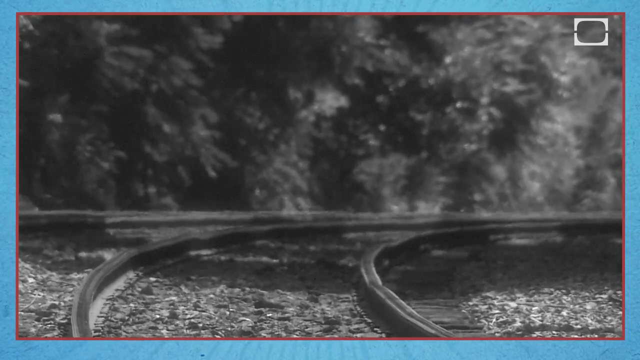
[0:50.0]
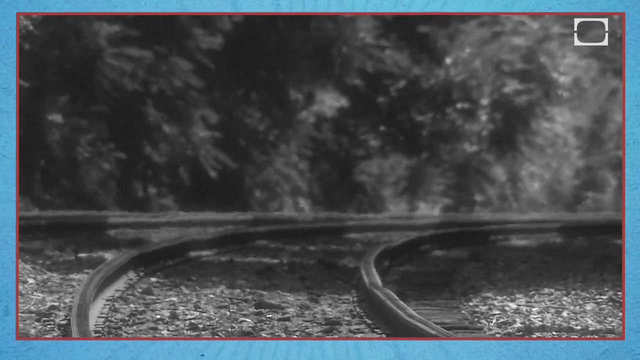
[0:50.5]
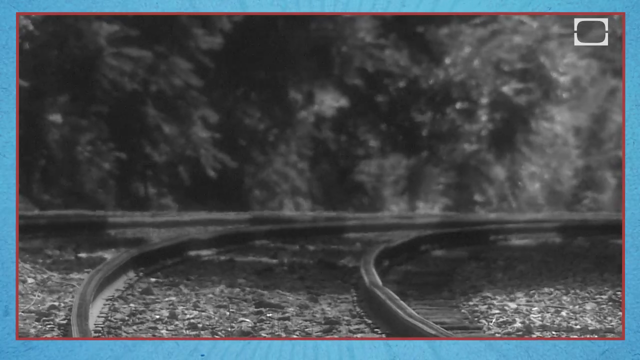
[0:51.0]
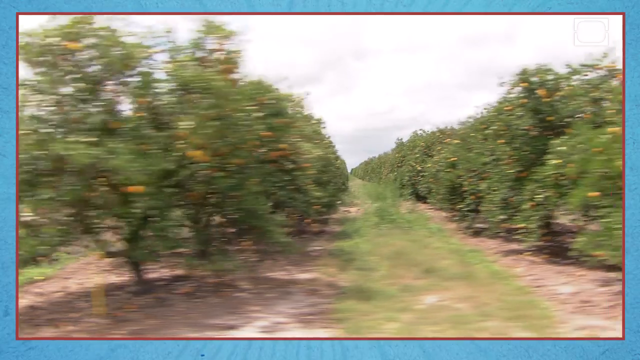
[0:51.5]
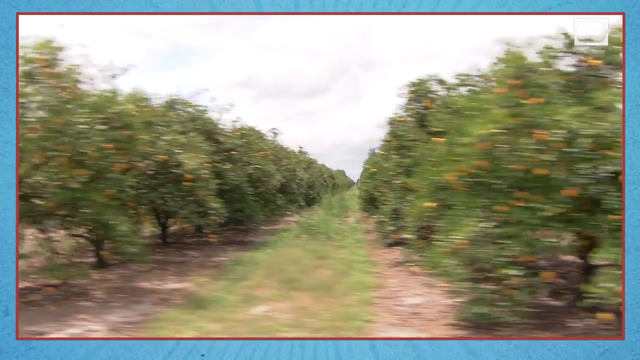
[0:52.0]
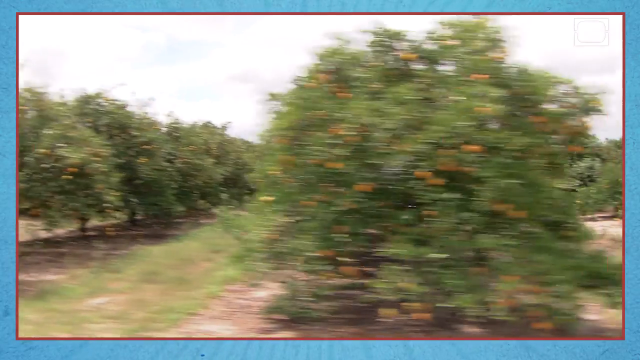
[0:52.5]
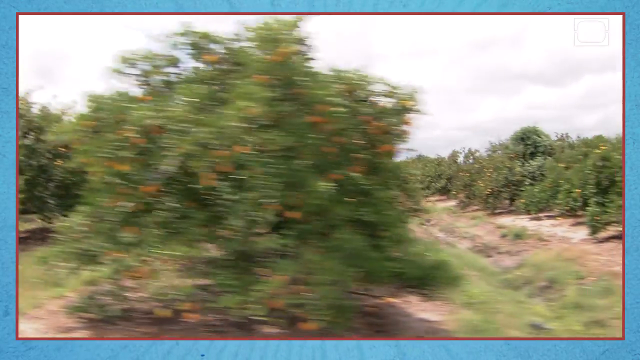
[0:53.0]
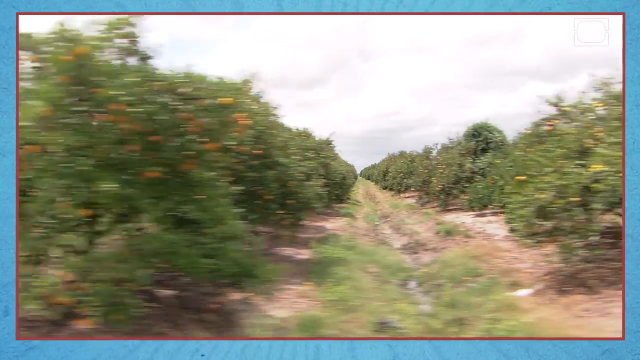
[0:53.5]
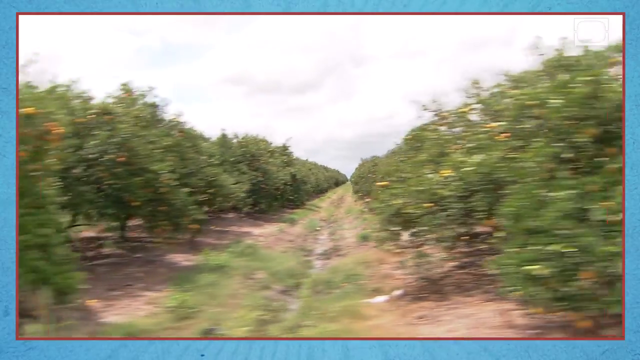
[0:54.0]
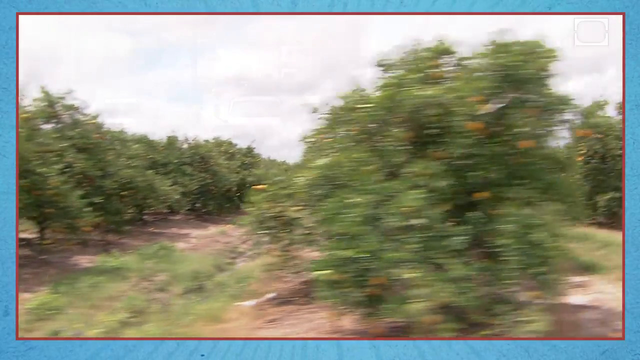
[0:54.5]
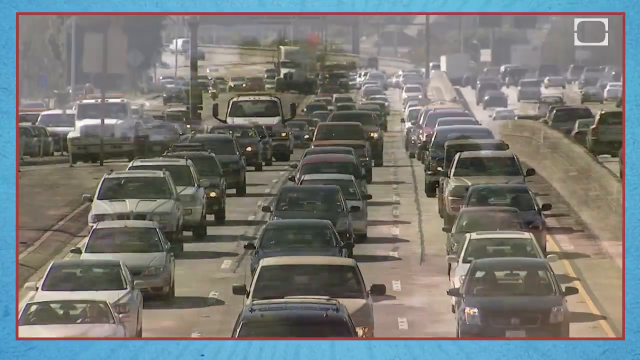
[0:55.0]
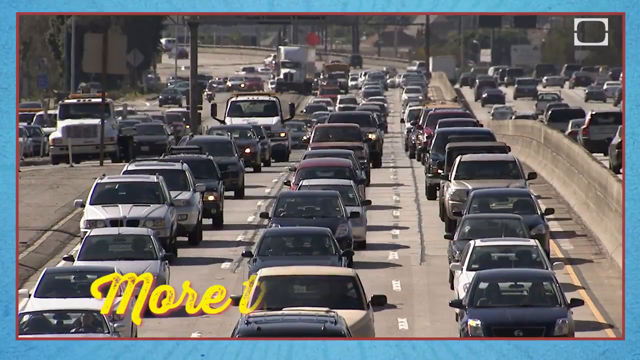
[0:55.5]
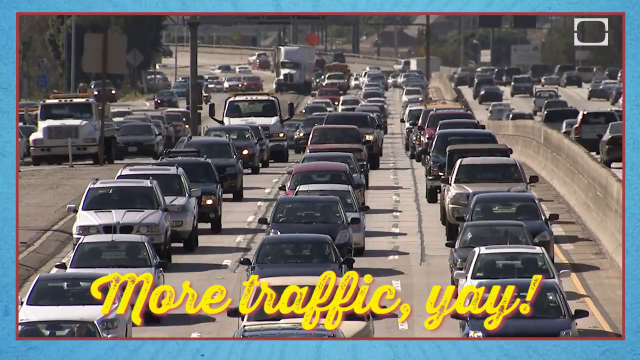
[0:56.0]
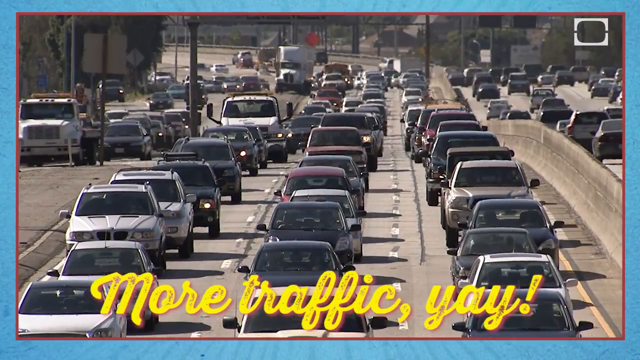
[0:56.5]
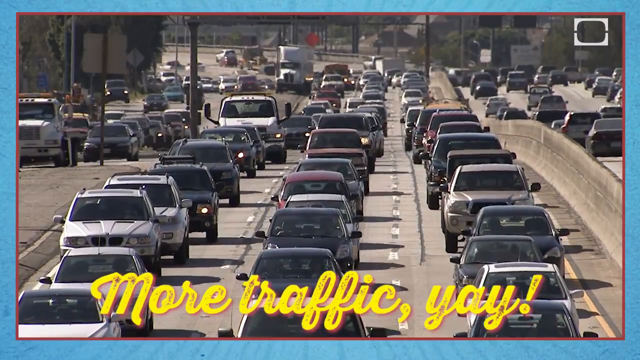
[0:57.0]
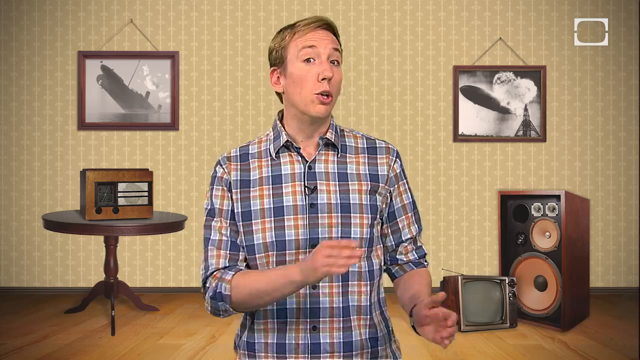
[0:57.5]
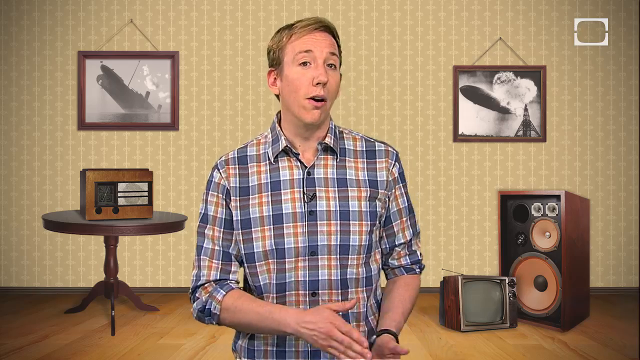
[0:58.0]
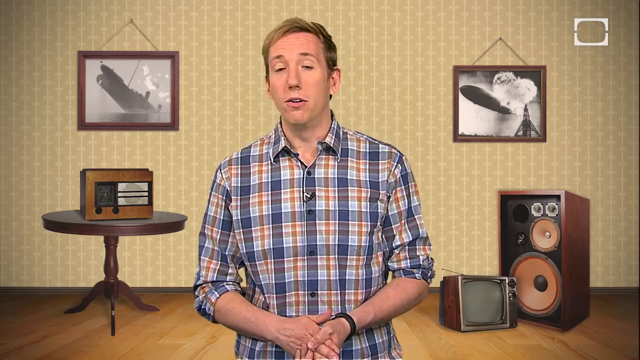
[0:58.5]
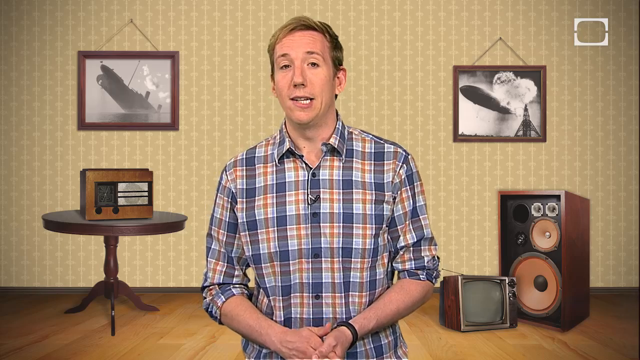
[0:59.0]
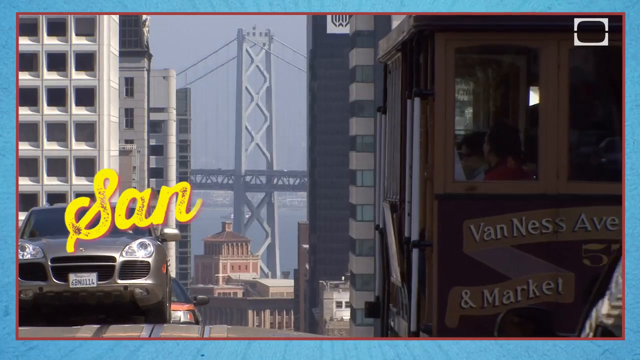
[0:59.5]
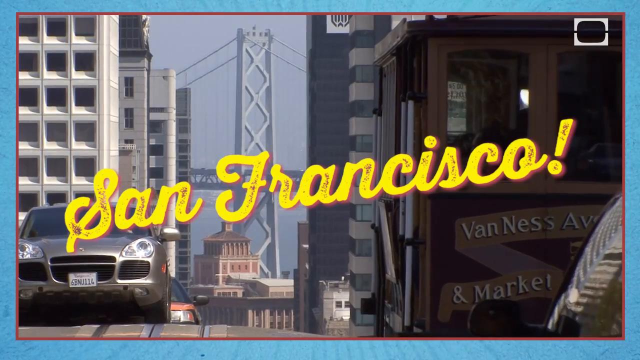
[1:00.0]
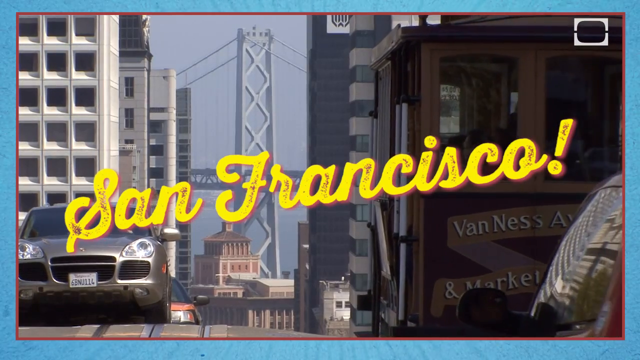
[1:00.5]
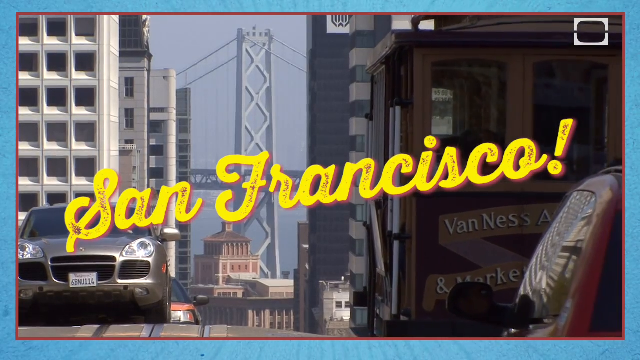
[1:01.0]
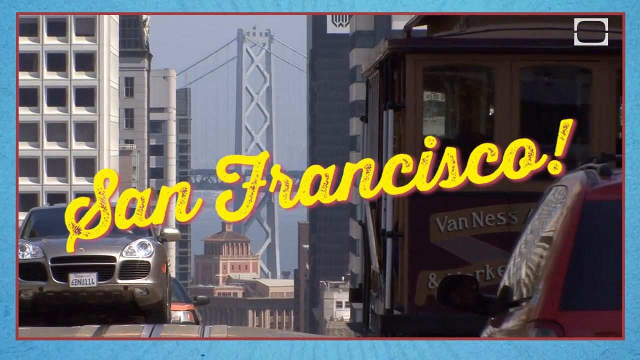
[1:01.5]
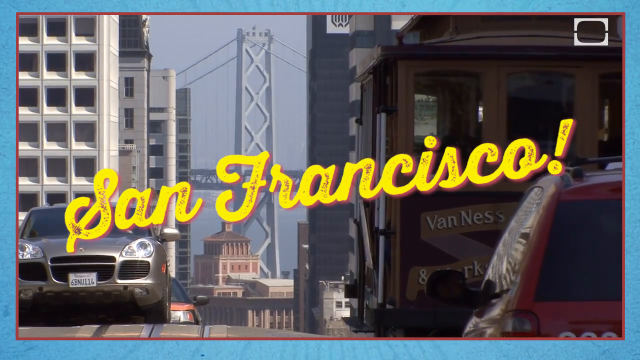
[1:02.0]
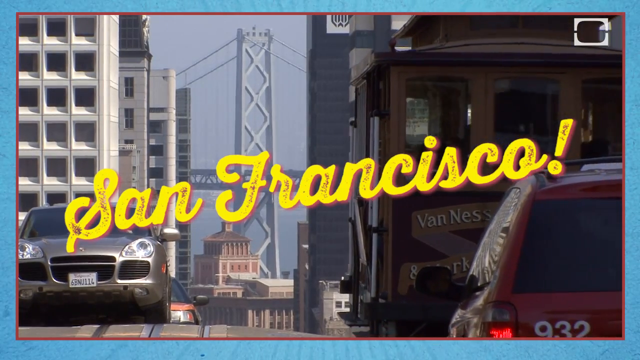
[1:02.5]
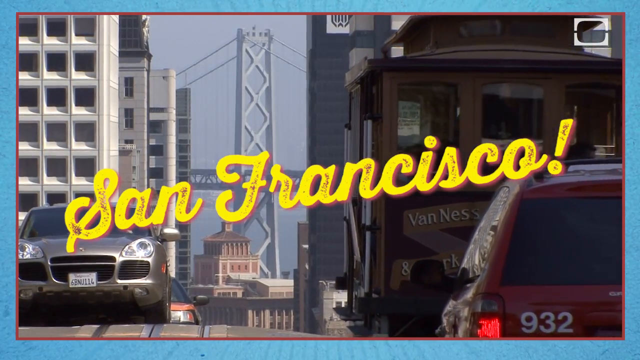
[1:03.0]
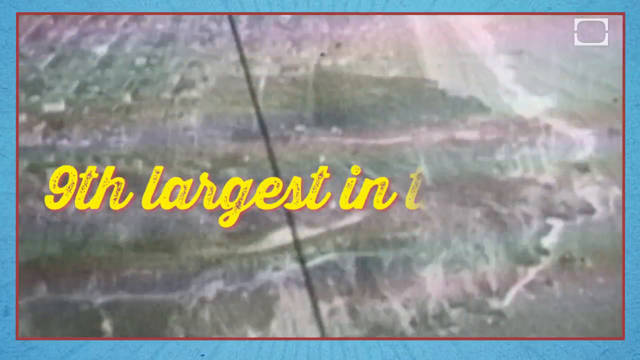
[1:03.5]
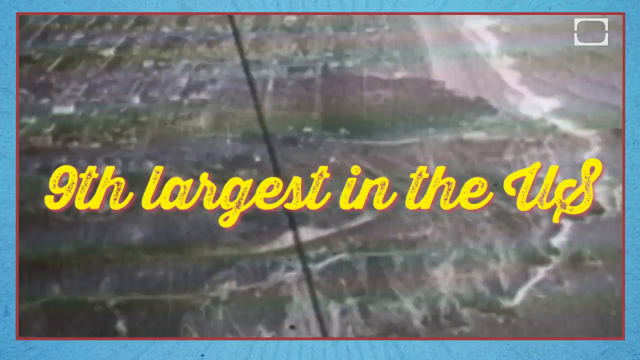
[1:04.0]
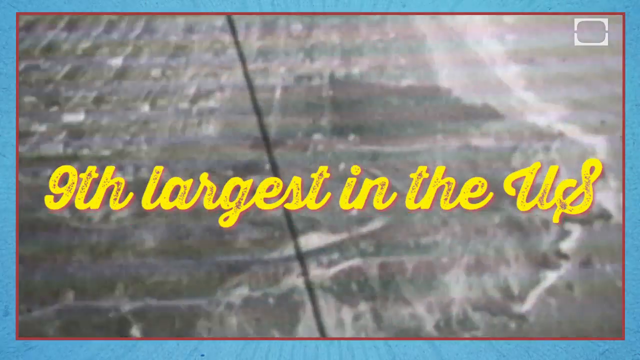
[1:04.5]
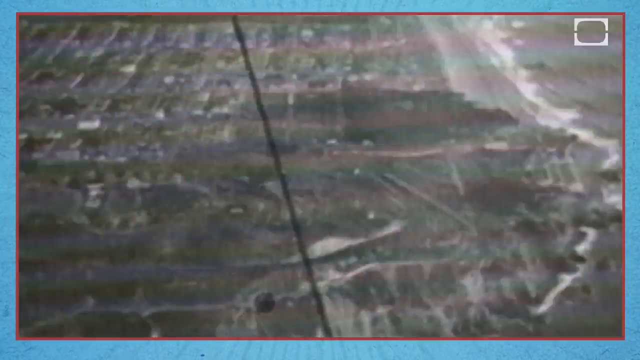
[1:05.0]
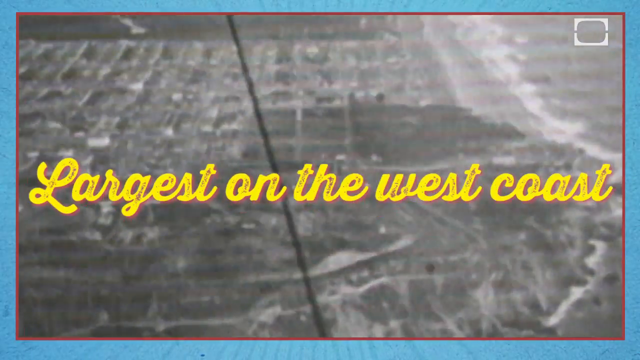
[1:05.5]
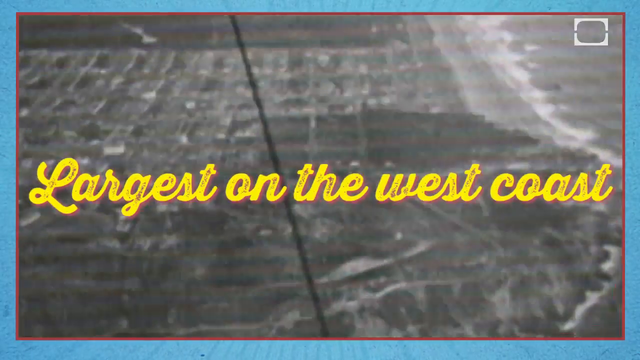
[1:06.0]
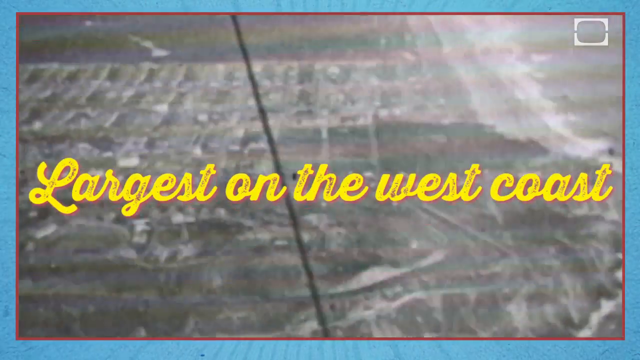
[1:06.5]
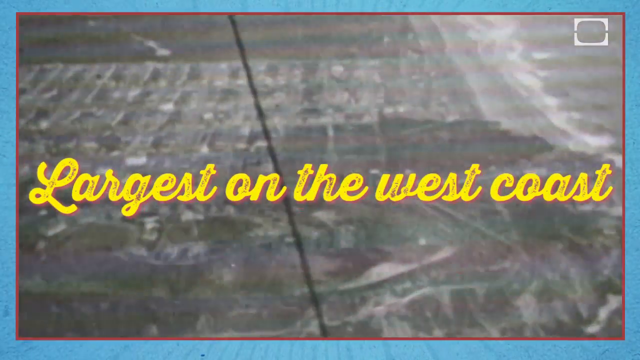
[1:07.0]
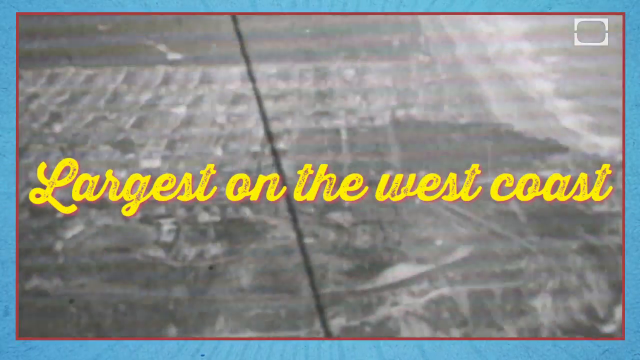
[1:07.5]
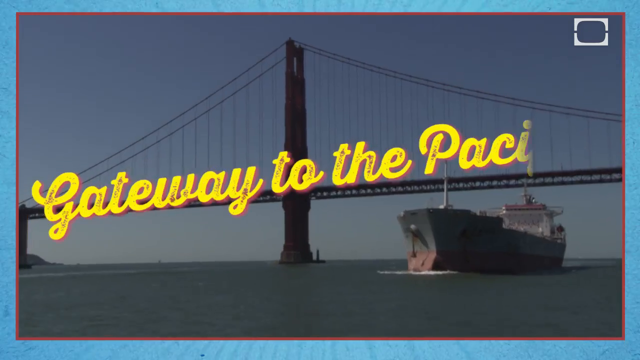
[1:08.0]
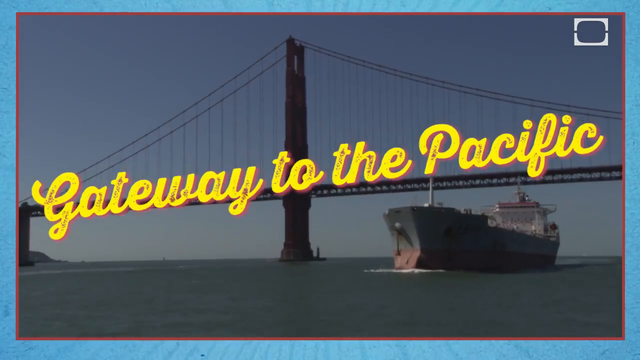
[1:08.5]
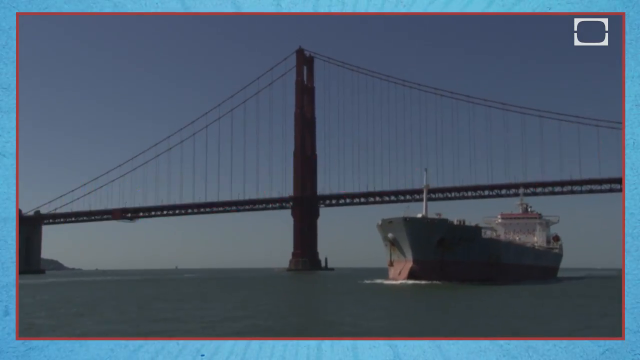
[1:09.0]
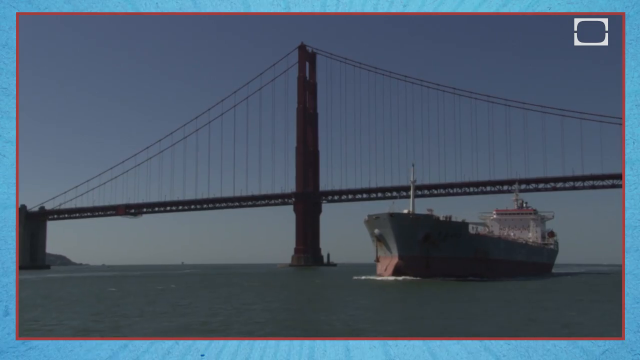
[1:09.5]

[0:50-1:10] More black and white images appear; at the beginning is the end of one black and white clip showing a giant cloud in the background and a railroad track curving up in the background to the right. After that, a video shows someone driving through some sort of farm field, with several rows of little reddish, pinkish plants on different bushes and what look almost like alleyways between each set of bushes. Next comes footage of a highway that is really blocked up, with text at the bottom reading "more traffic, yay," seemingly a joke segment. After that, footage shows San Francisco with the famous trolley that goes downtown, followed by more sky footage and a boat going across the ocean.